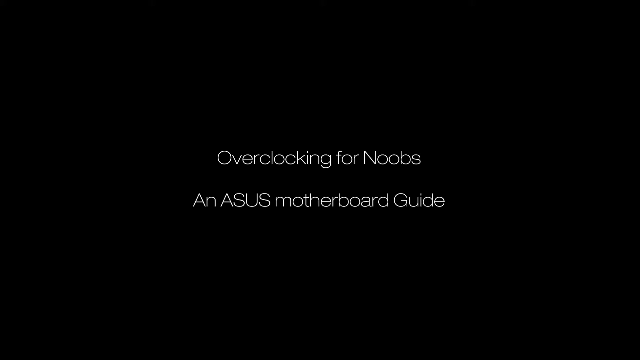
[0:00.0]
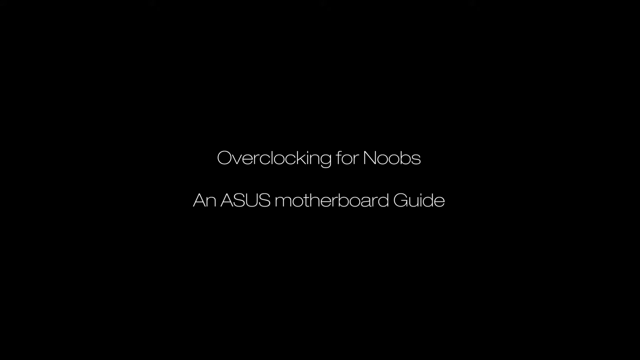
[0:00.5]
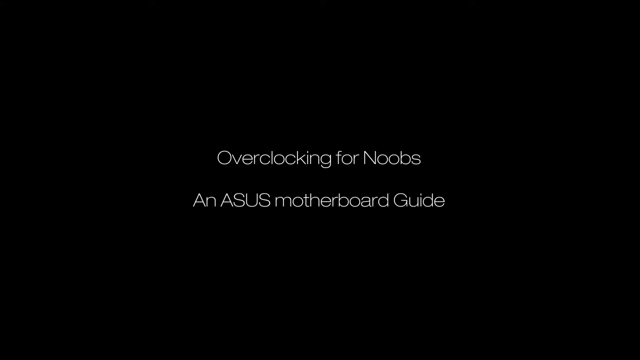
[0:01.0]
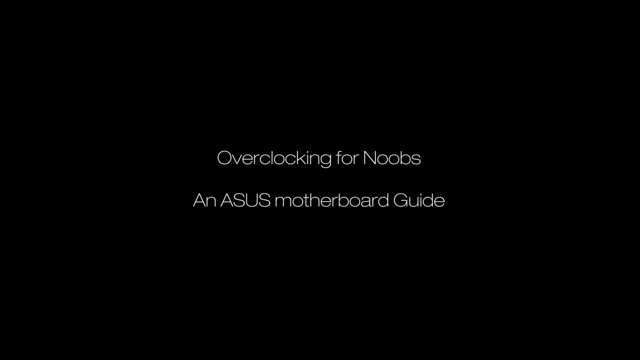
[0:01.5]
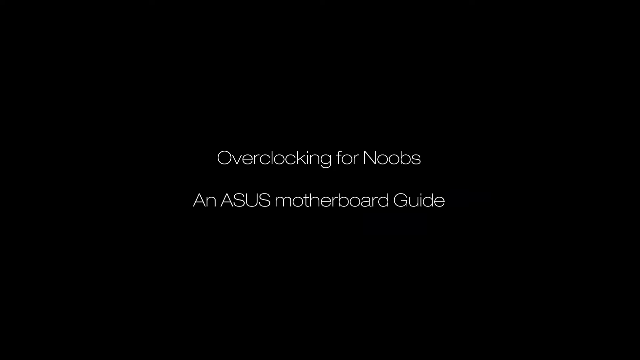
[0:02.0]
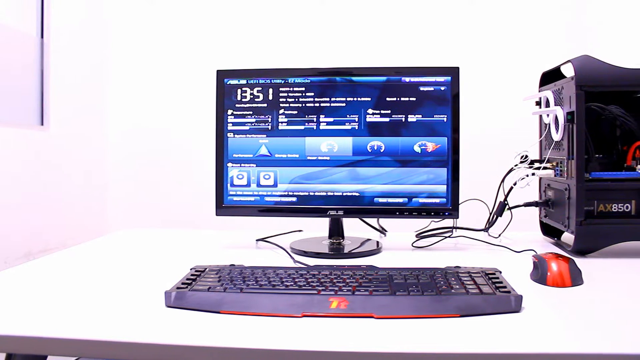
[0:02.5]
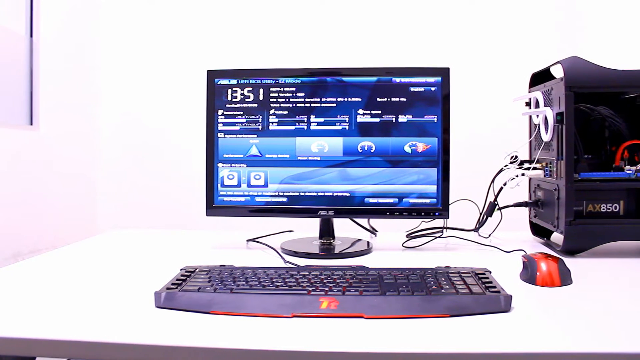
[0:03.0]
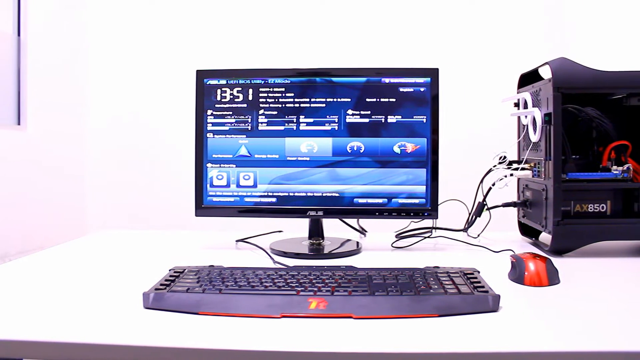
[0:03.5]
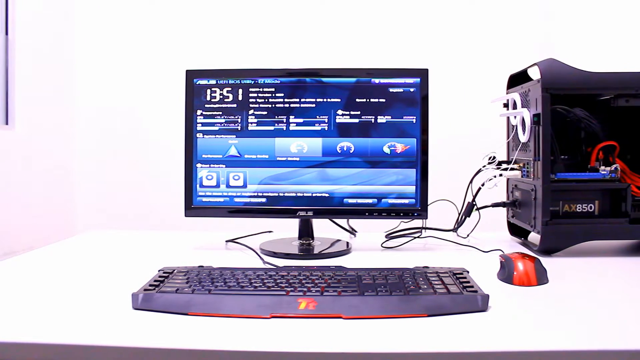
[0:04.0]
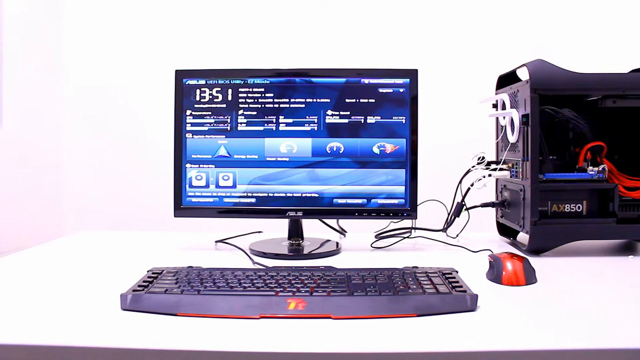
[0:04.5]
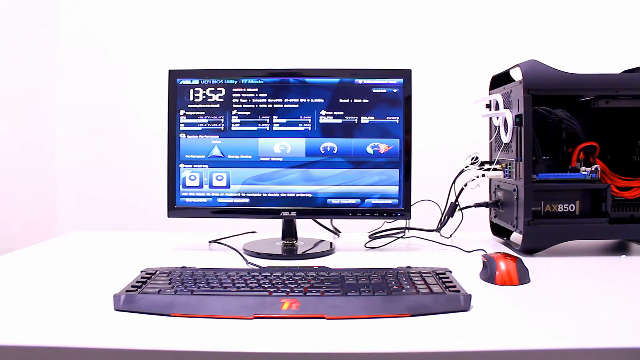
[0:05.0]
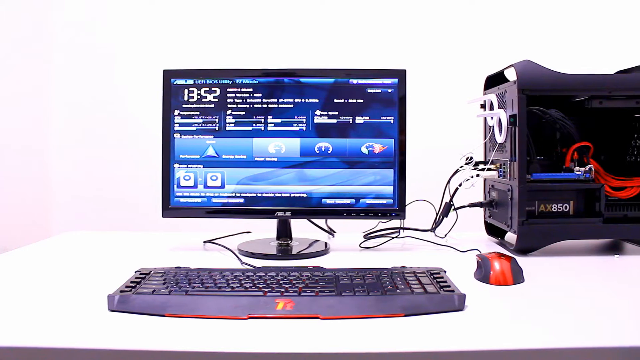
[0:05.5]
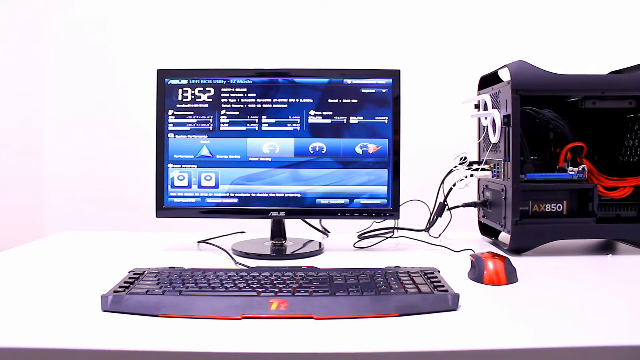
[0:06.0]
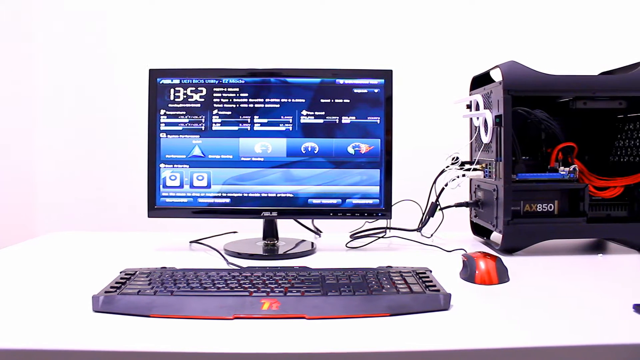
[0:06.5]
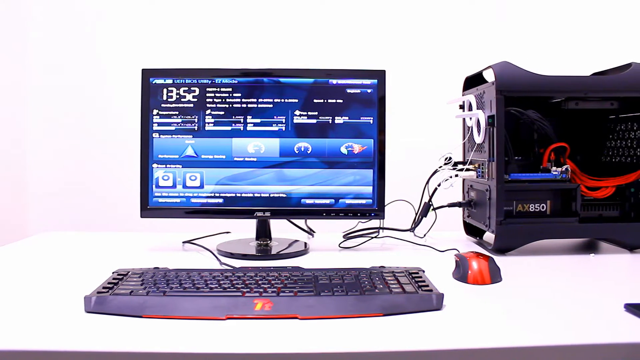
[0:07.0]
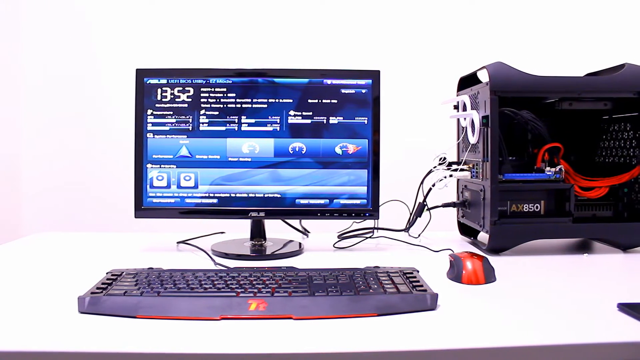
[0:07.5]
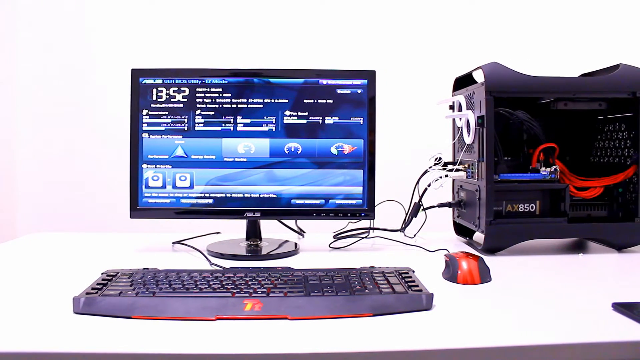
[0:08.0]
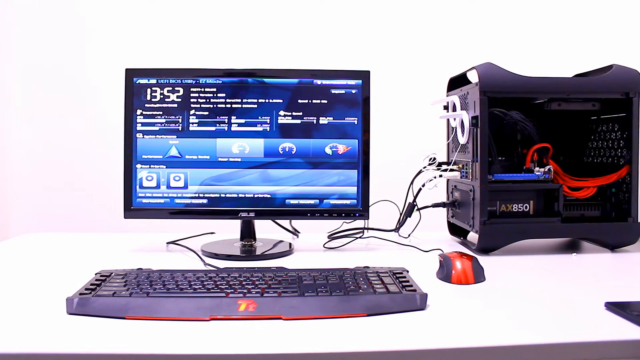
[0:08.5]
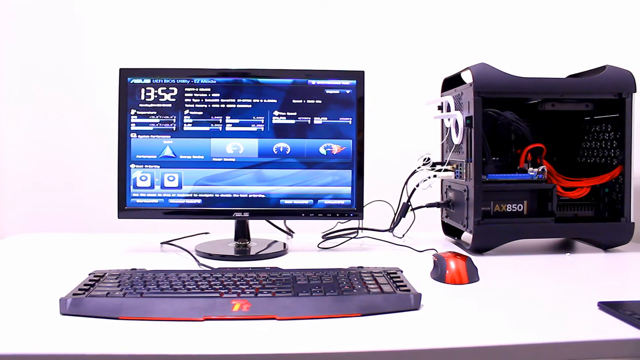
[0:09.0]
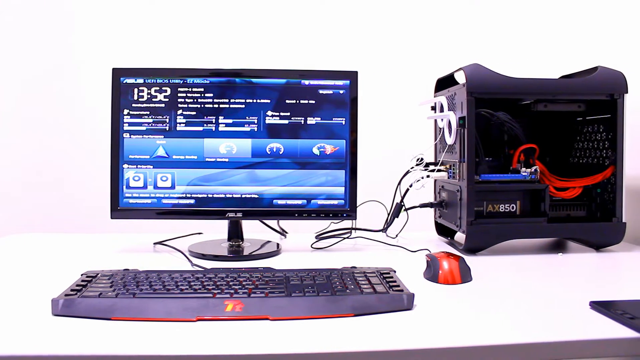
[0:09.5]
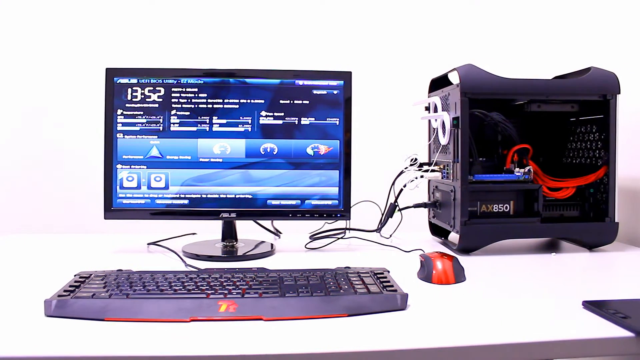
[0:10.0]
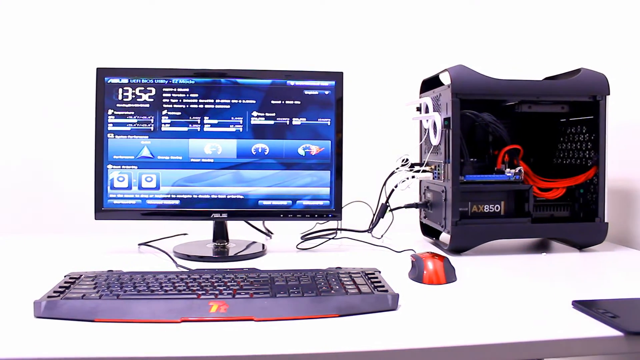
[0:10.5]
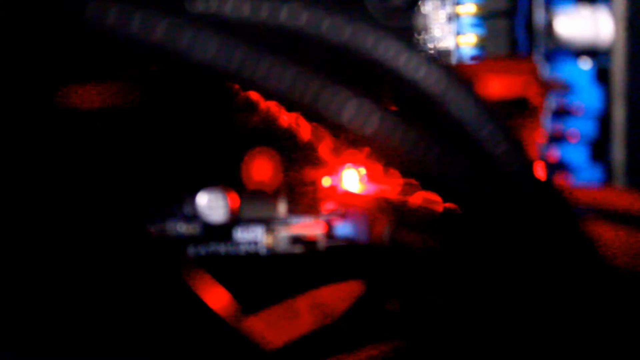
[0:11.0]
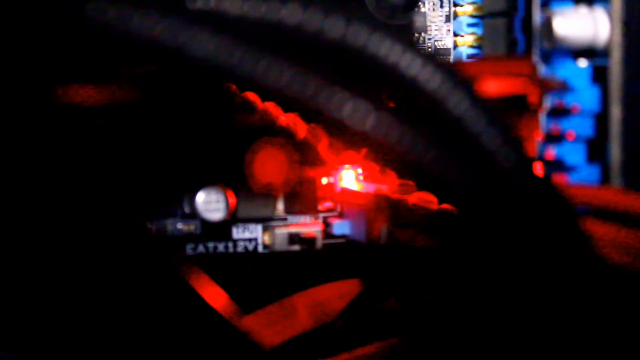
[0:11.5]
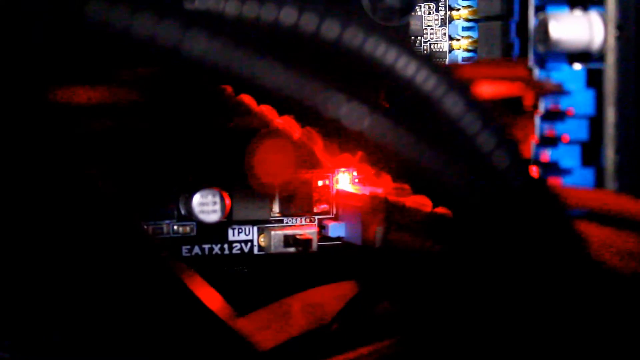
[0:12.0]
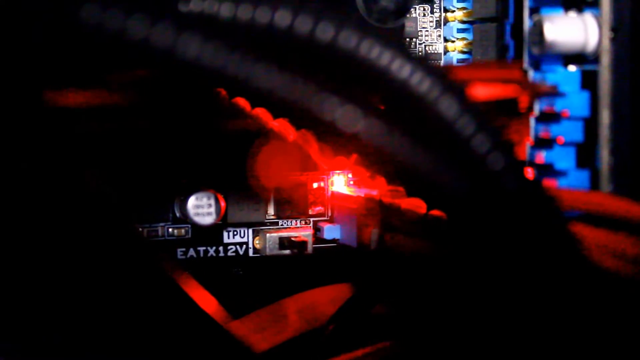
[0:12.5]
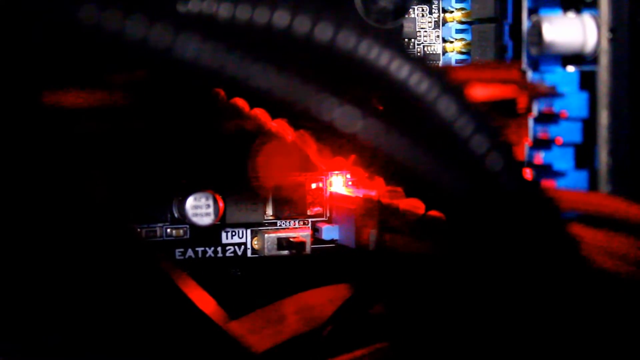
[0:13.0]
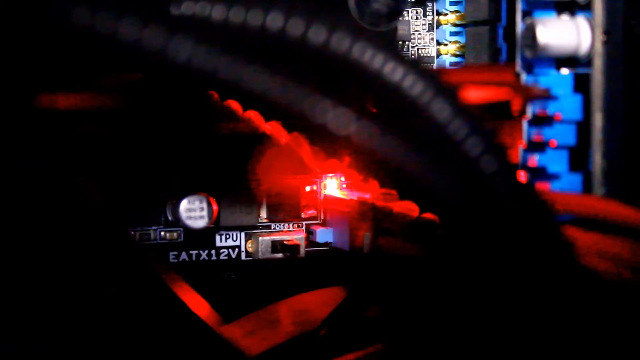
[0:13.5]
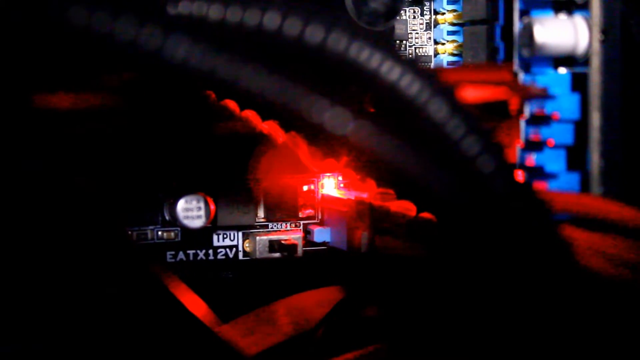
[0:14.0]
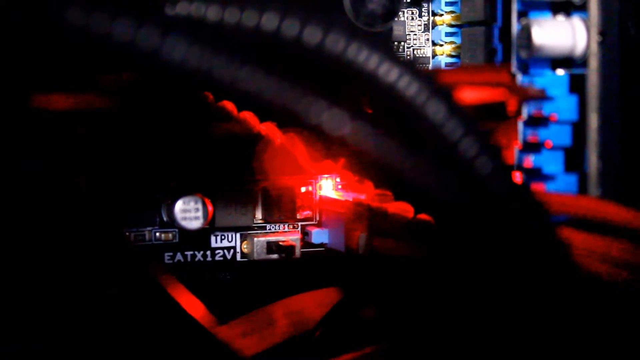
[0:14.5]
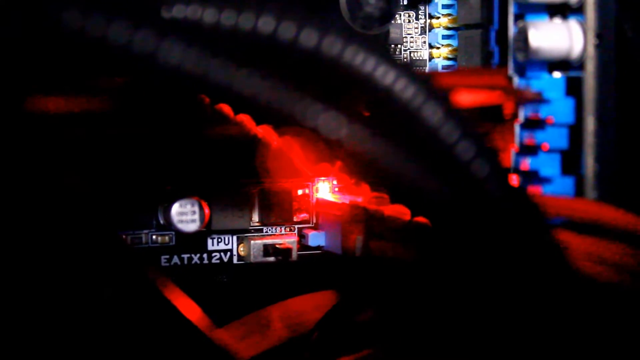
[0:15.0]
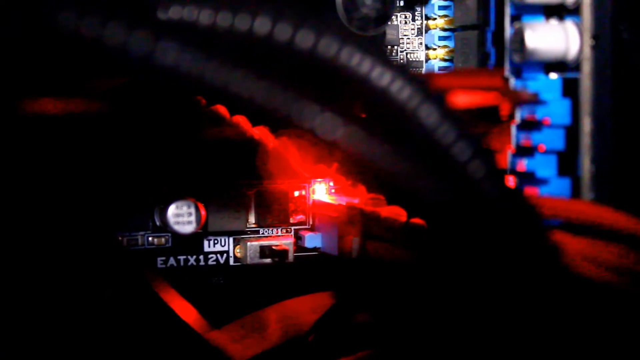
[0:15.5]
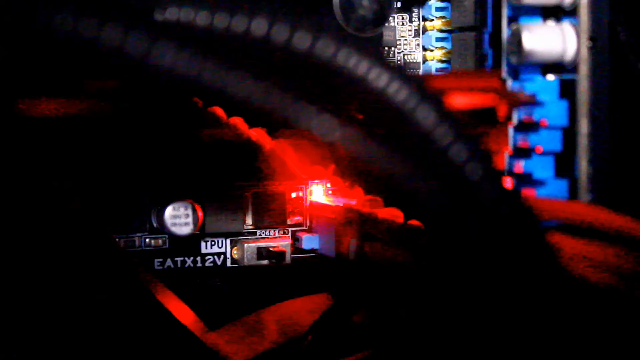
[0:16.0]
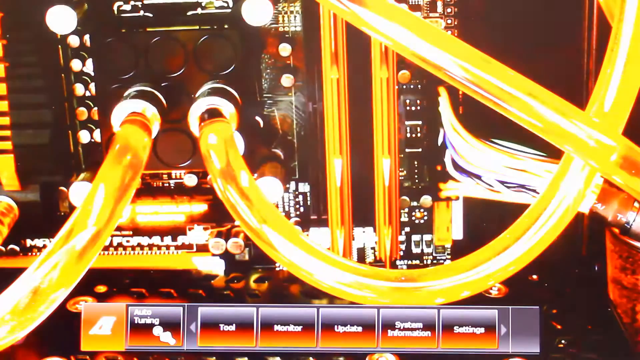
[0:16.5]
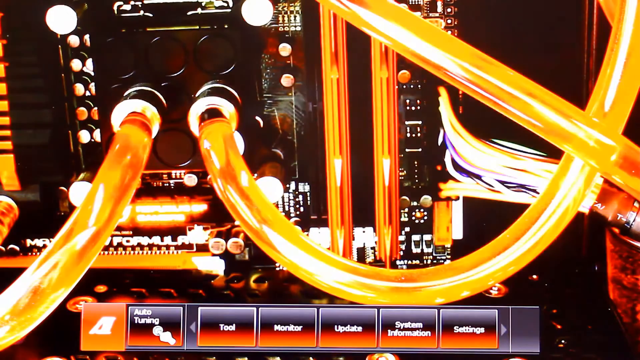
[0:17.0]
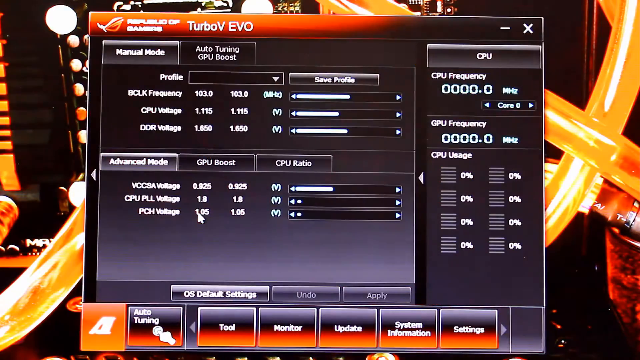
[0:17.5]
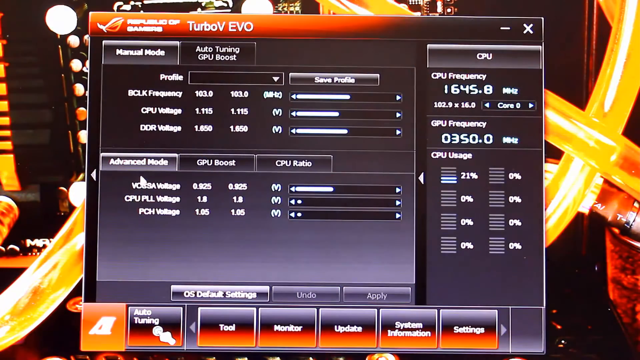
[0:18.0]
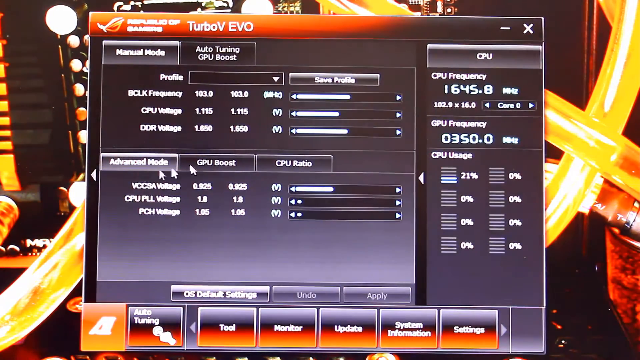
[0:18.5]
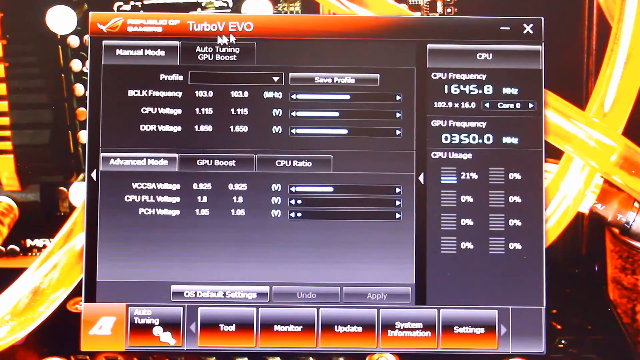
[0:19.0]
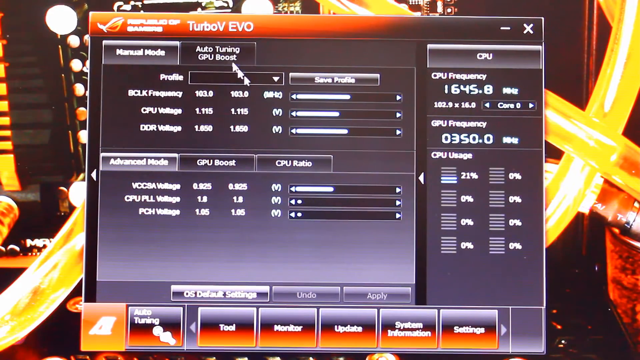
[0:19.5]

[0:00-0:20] The video opens on a black screen with white text reading "Overclocking for Noobs" and "ASUS Motherboard Guide." The setting then changes to what appears to be a plain white room, where a computer with a keyboard, a mouse and its tower is sitting on a white desk. The computer is connected and running, showing its BIOS. The scene switches to a close-up of the computer, apparently of its motherboard, and then to what appears to be a wallpaper of the inside of a computer. Someone opens a program called Turbo V Evo. The person highlights the program's name with a white mouse pointer, then lowers the pointer to the bottom of the program, which has various options for changing settings on the computer, such as the CPU voltage.